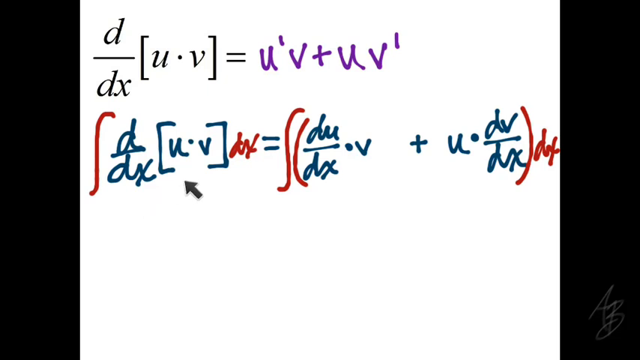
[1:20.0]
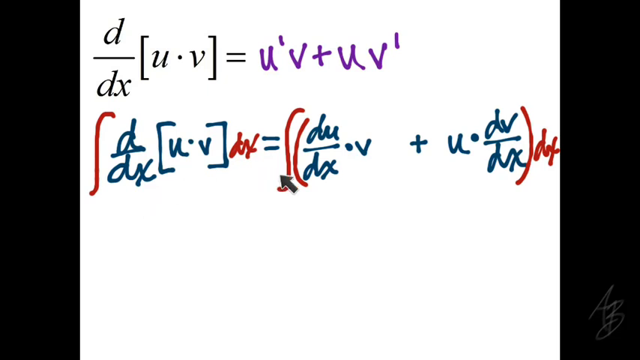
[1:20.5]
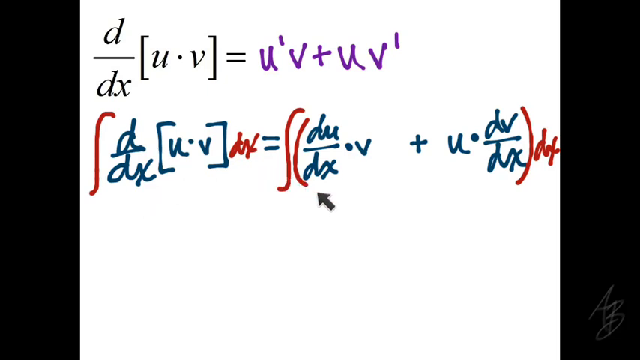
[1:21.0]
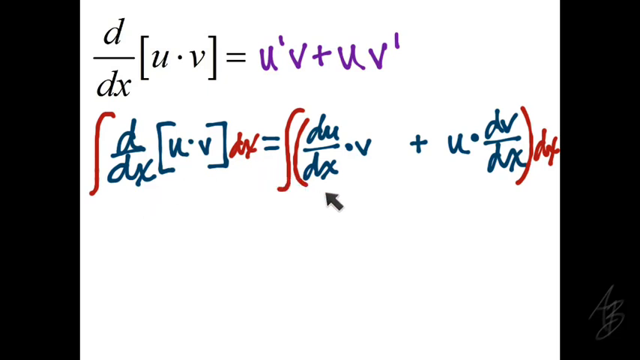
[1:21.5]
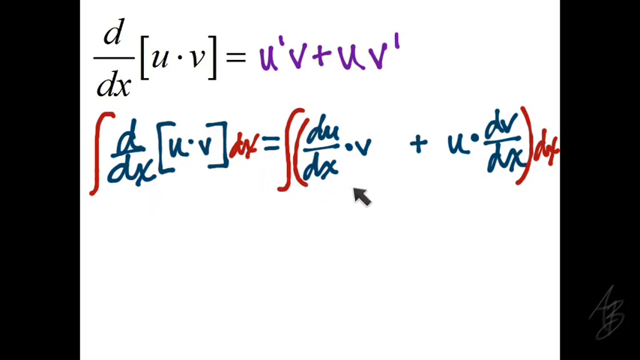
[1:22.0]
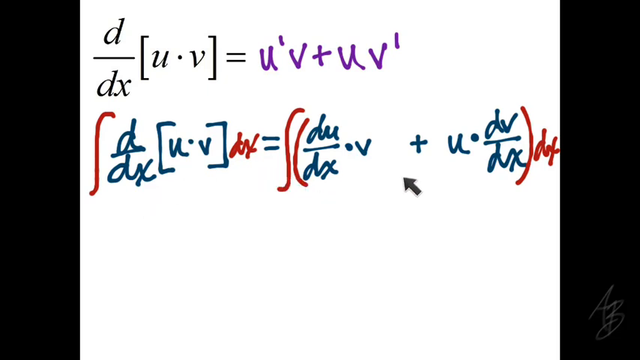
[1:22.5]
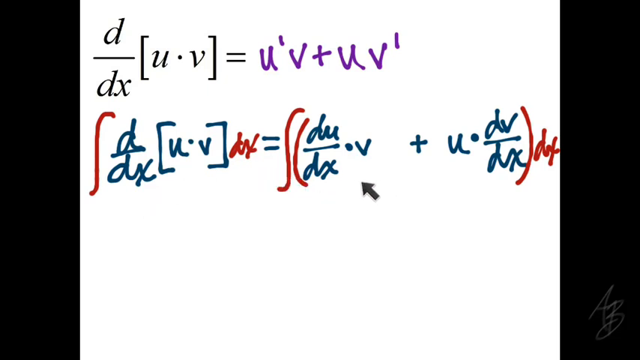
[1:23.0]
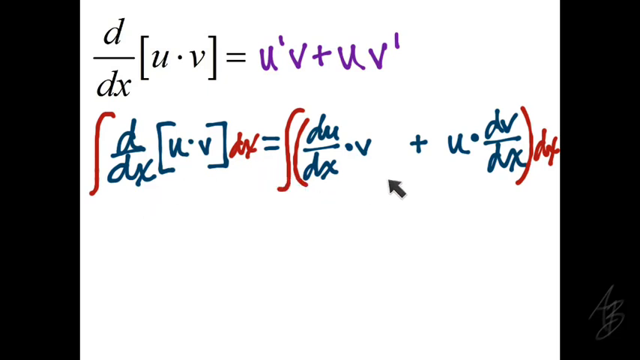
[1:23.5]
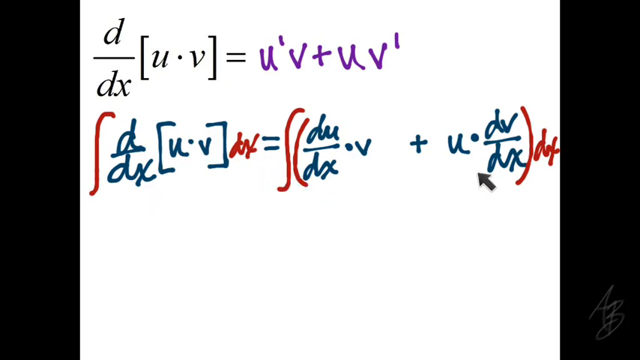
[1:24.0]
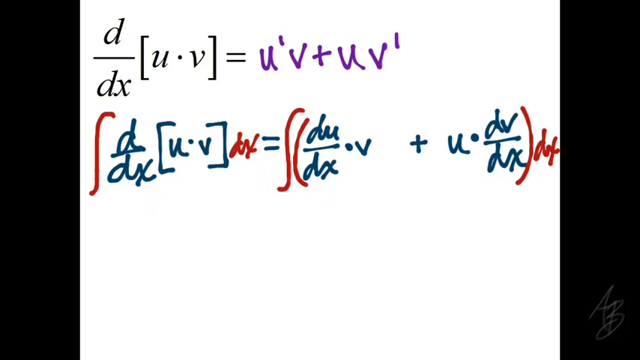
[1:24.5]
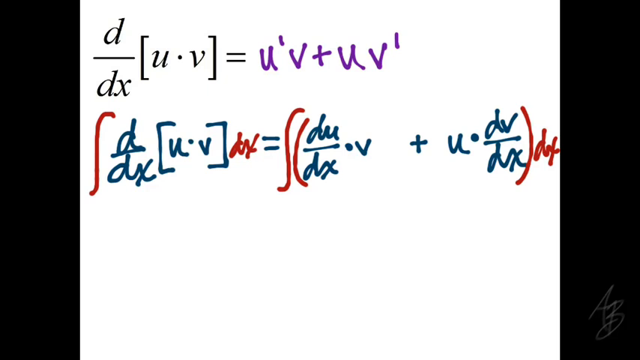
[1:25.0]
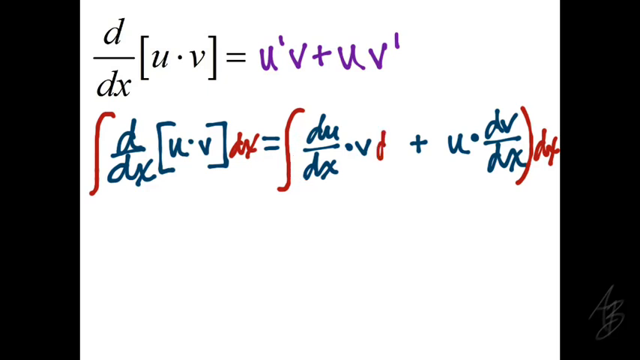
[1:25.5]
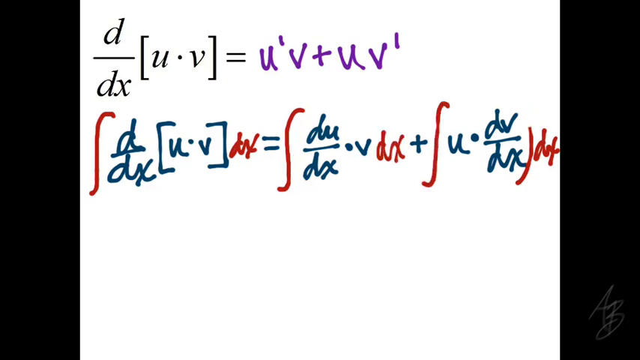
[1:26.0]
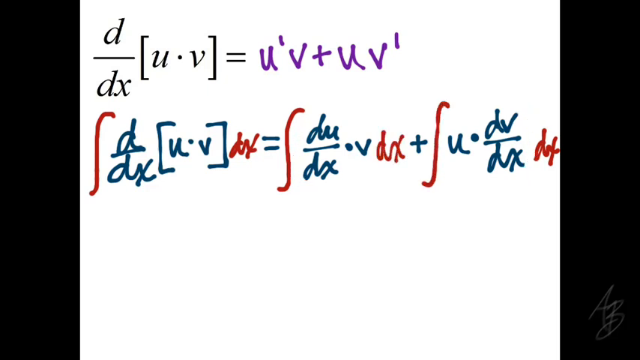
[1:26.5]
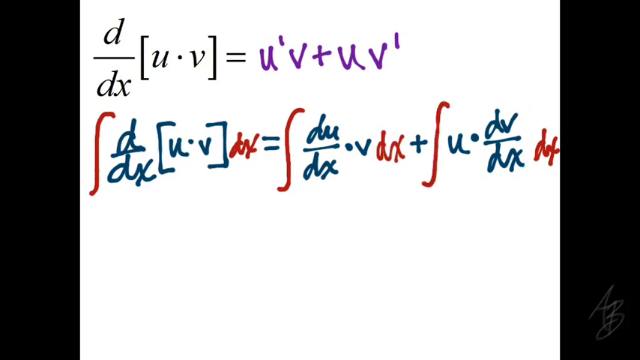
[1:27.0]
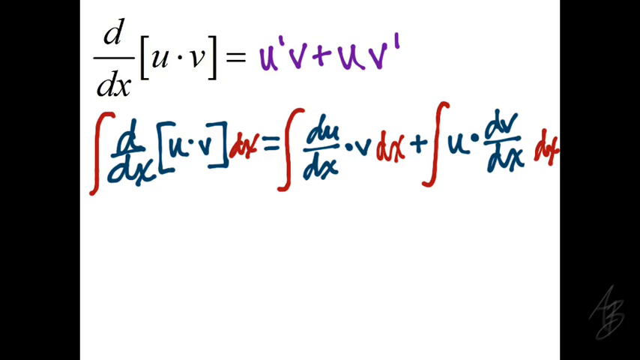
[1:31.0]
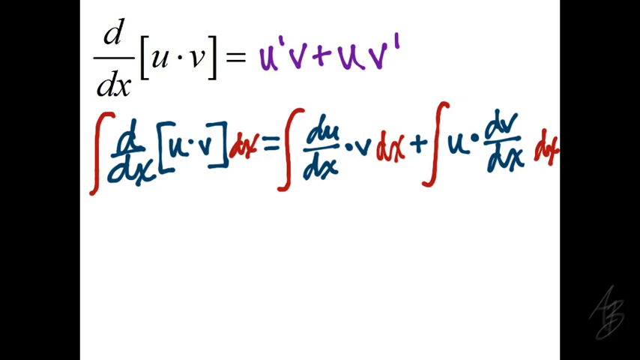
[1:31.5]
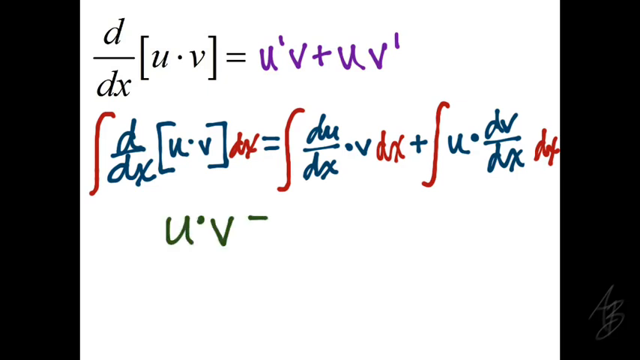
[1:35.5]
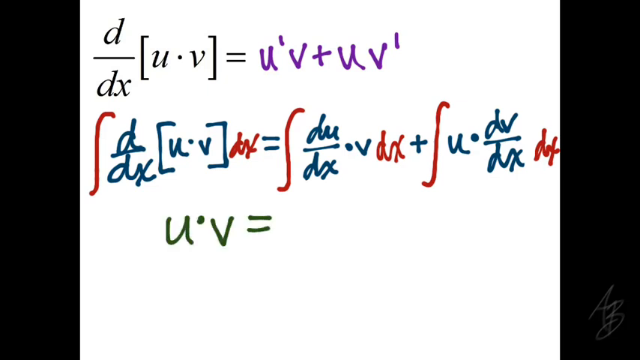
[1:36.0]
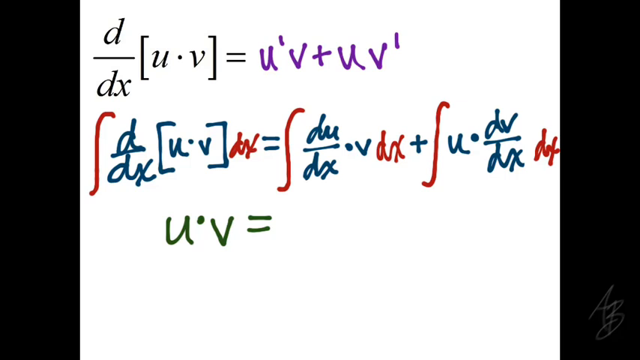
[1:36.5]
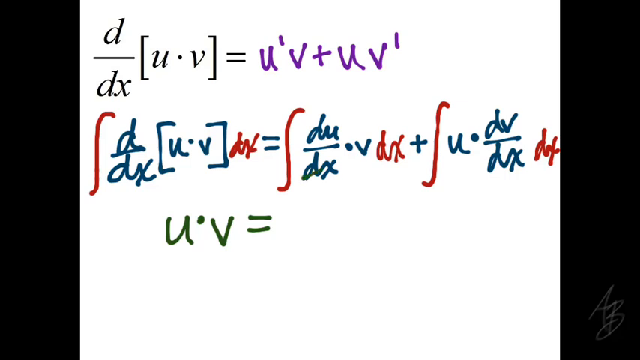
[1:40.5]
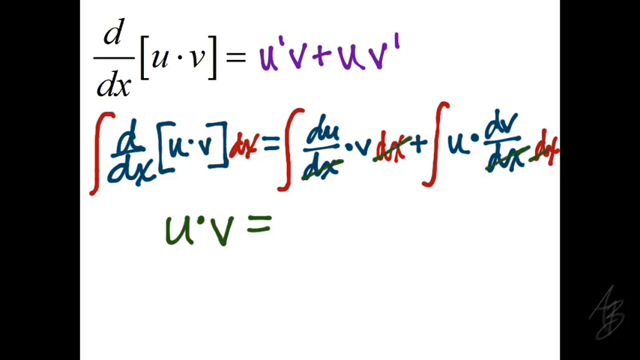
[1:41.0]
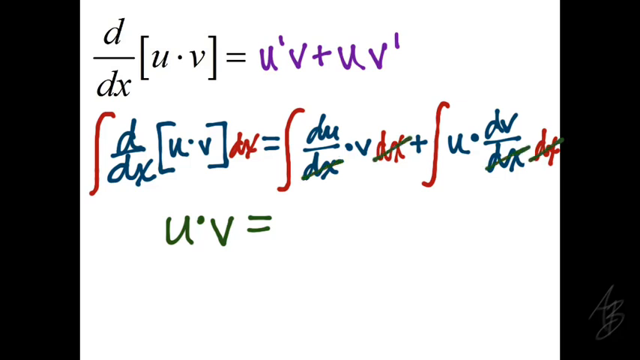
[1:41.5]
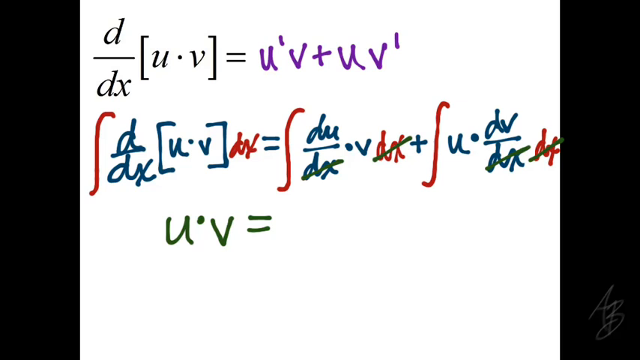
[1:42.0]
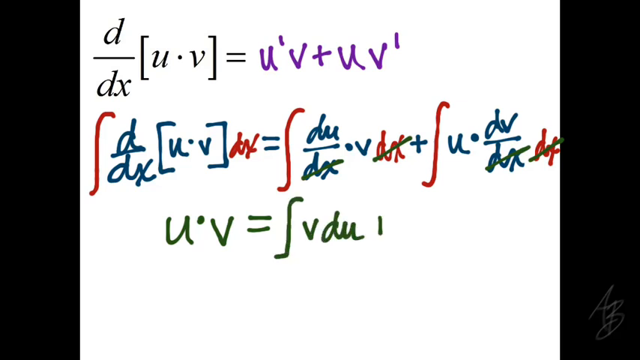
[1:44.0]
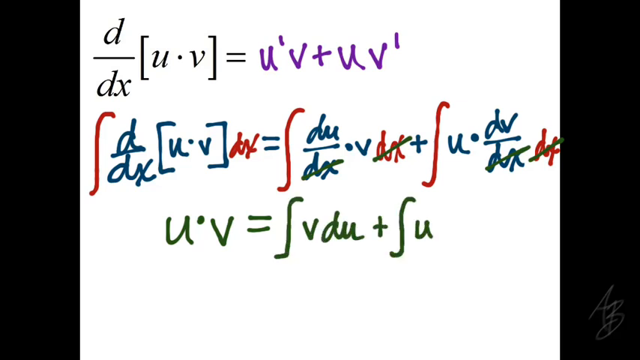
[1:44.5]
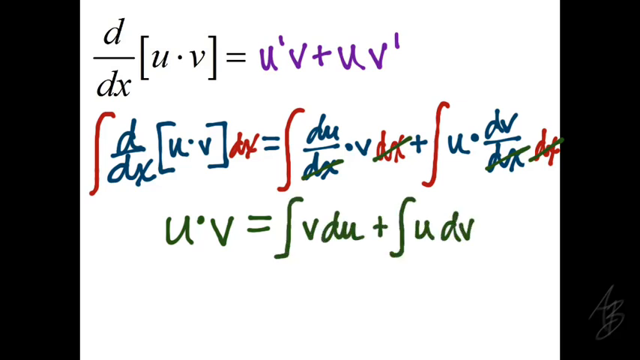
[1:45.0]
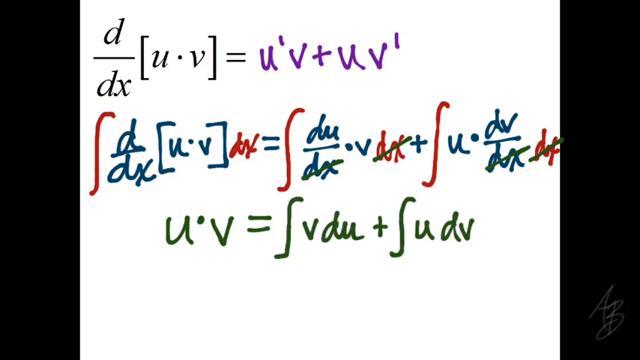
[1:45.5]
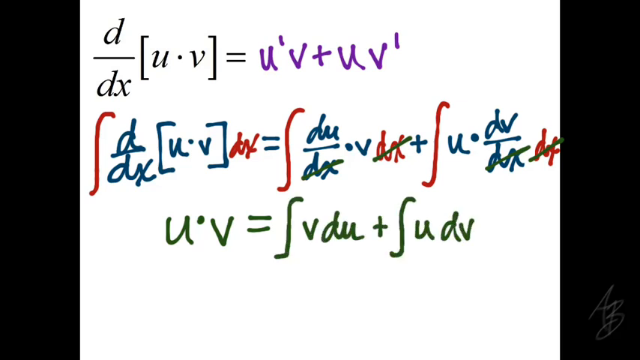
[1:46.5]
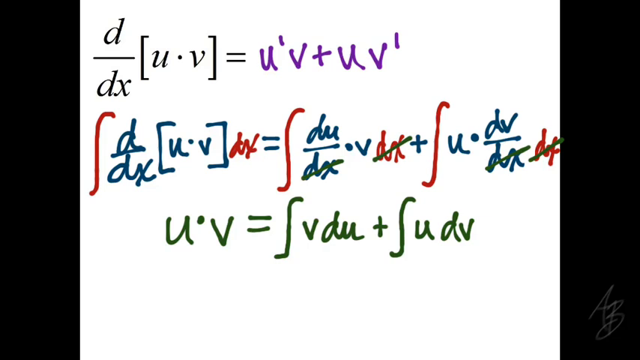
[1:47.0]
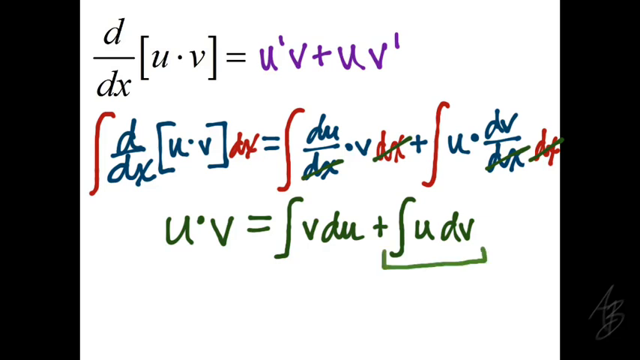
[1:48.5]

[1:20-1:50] The animated pointer moves over the equation, starting on the left side and pointing out the u times v, then moving to the right side to point out the integral and the red parentheses. The parentheses are then removed, keeping the integral and adding a dx and an integral sign after the plus sign, so the right side of the equal sign reads: the integral of du over dx times v dx plus the integral of u times dv over dx times dx. Below that, in green marker, u times v equals the integral of v du plus the integral of u dv is written. The green marker crosses out the dx in the denominator right after the integral on the right side of the equal sign on the second line, and also crosses off the other dx, much like cancelling in fractions. It then crosses out the dx in the denominator in the second portion, integral u times dv over dx, cancelling it with the red dx at the end of the expression. The third line reads u times v equals the integral of v du plus the integral of u dv.